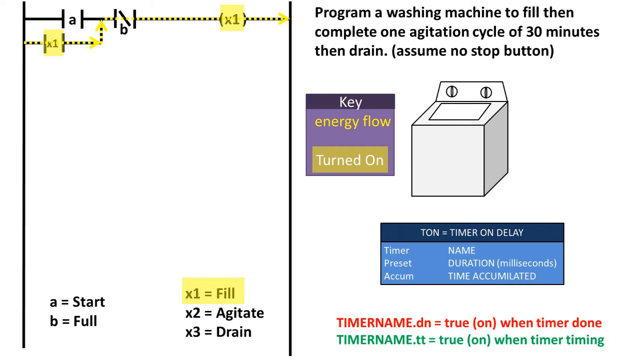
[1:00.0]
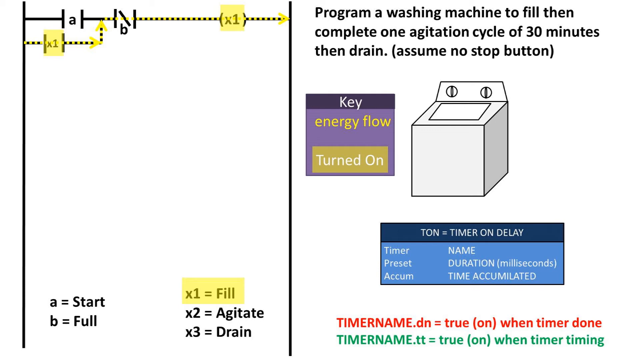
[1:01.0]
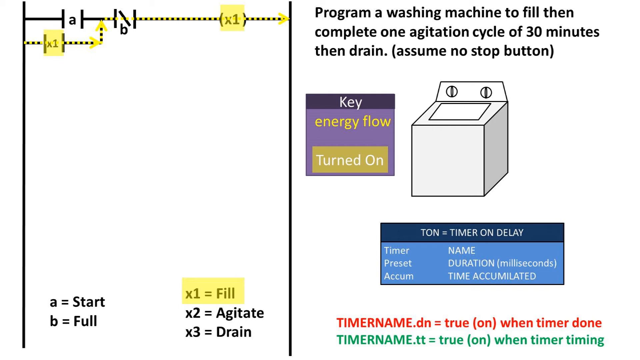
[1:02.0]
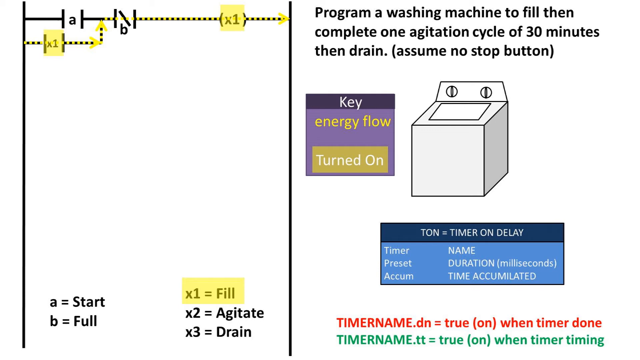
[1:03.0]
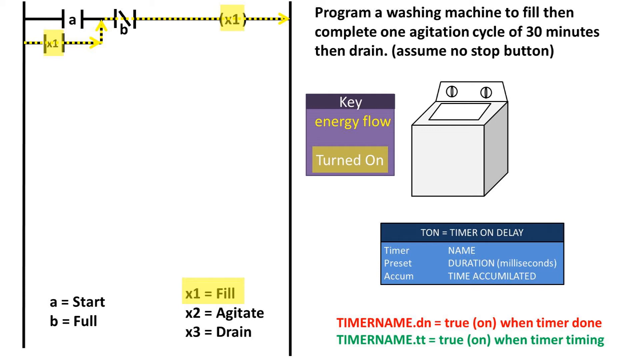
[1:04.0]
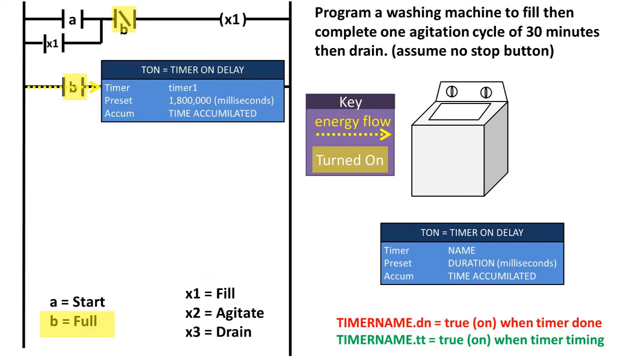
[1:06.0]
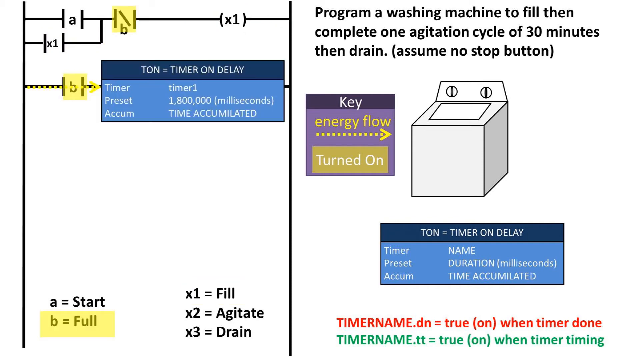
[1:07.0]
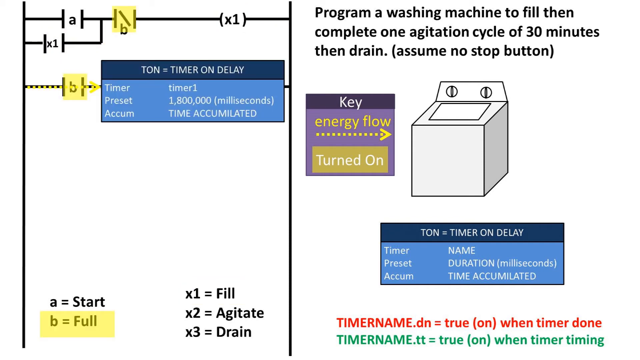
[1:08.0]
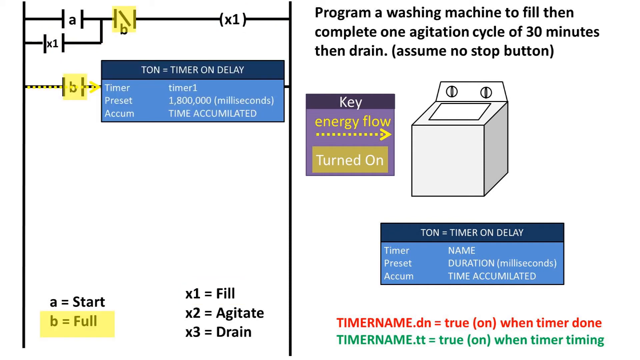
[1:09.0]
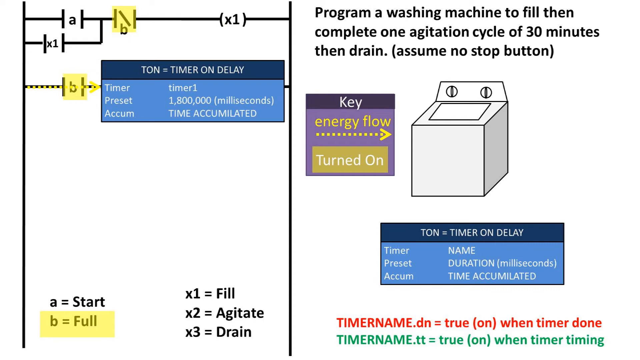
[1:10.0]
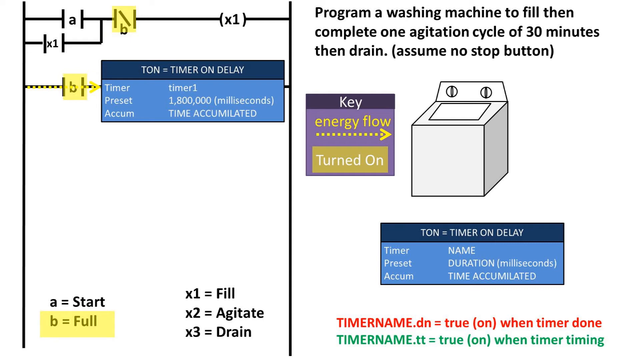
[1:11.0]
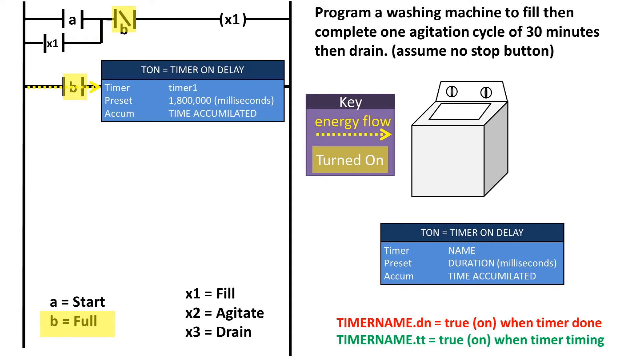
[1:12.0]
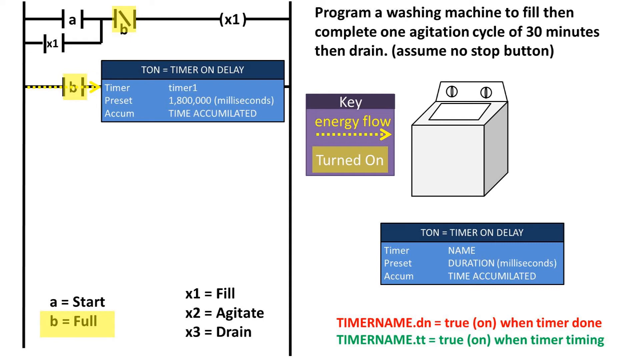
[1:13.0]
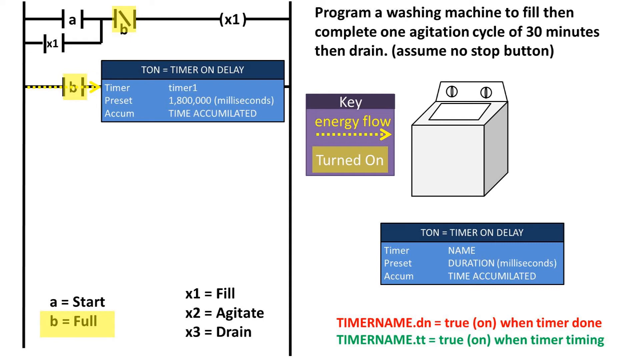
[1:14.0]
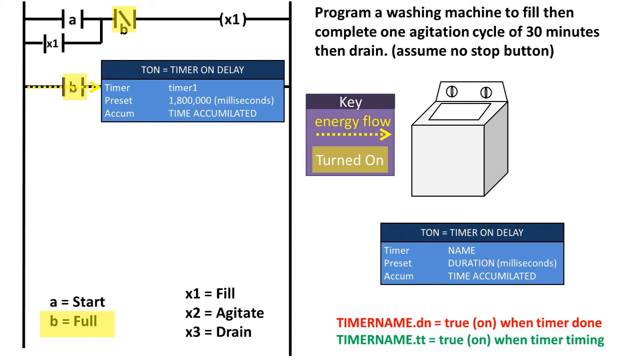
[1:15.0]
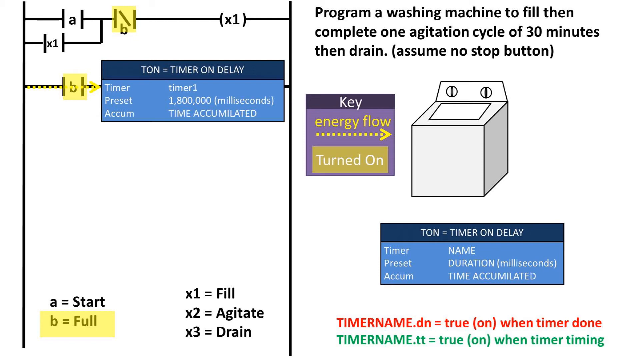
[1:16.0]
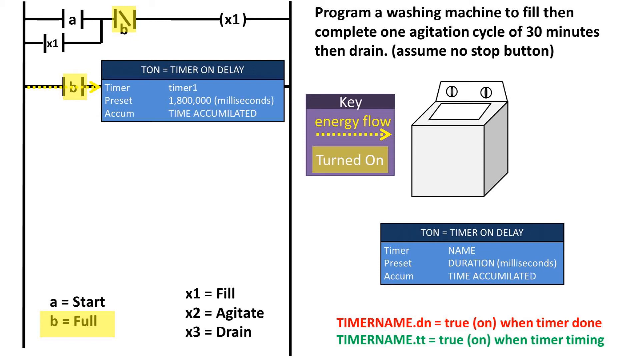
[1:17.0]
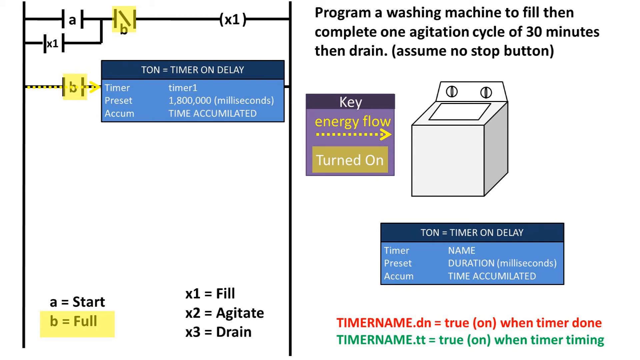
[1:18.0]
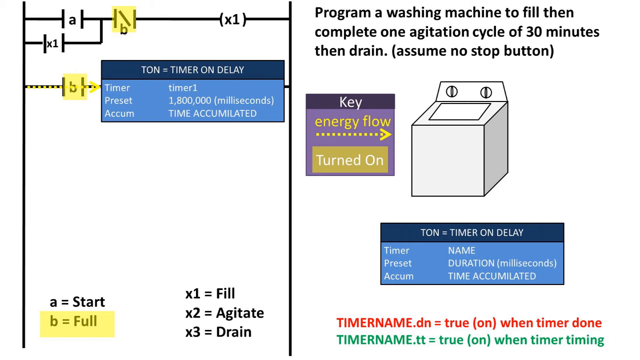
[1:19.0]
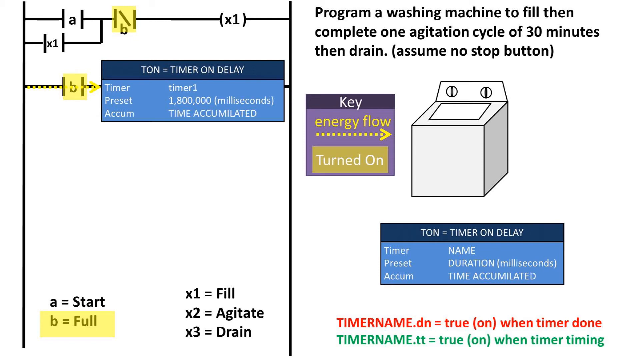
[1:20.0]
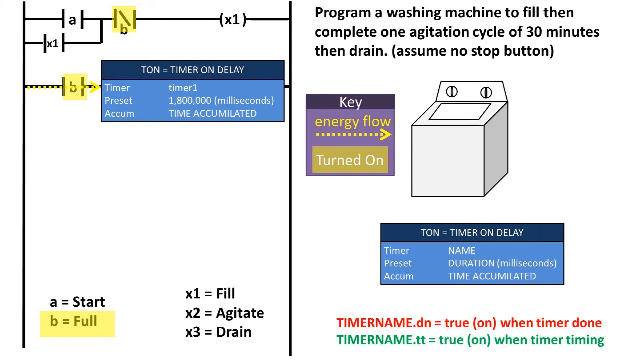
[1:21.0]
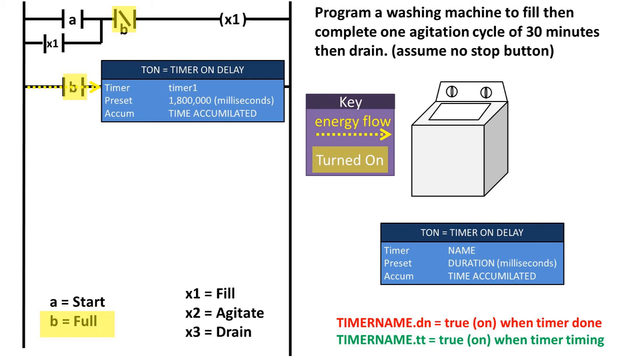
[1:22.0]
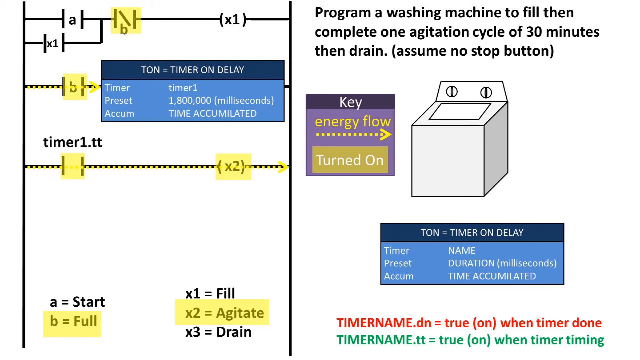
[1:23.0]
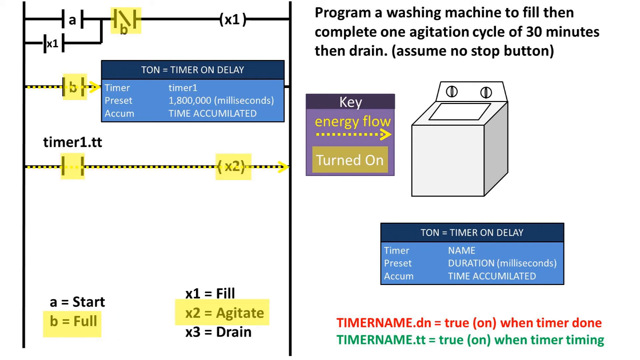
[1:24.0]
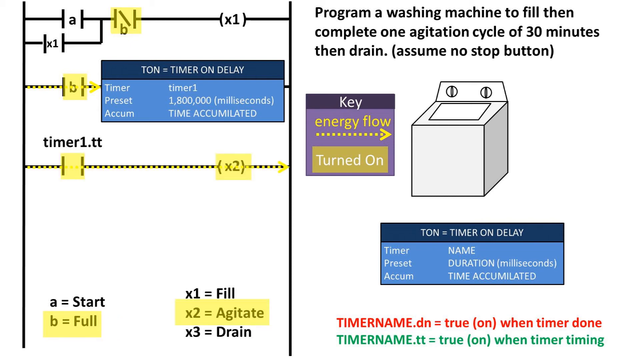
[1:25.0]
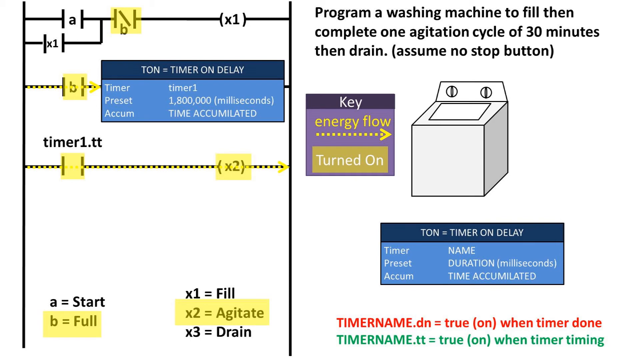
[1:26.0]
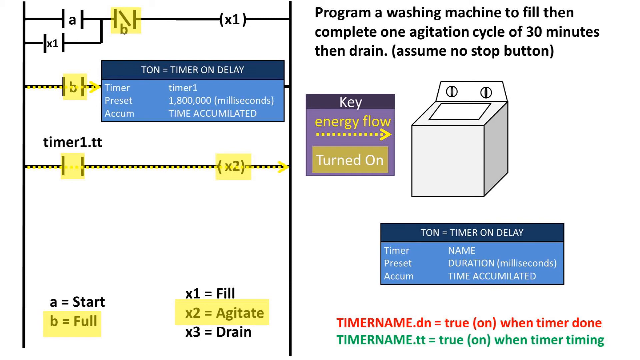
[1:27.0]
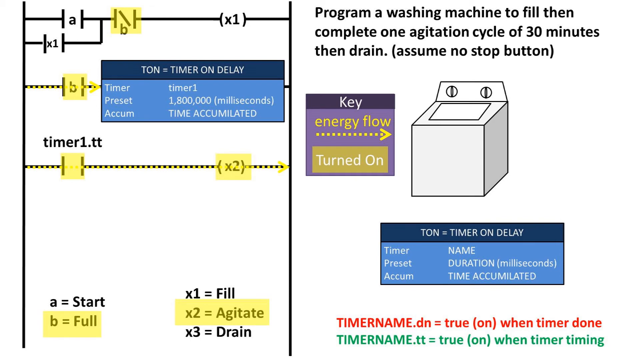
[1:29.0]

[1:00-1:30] The next slide of the presentation shows what seems to be a representation of an electric circuit. The first line has the letter A and the letter B with the NOT symbol, meaning the opposite of B's value. A dotted line connects toward the center of the screen to an X1 in parentheses or brackets, highlighted in yellow. To the right of this is the washing machine shown before. To its left is a small blue and purple rectangle that says "KEY", below it "ENERGY FLOW", and below that a green button with white text that says "TURN ON". Below, where the variables A, B, X1, X2 and X3 are listed, "X1 = FILL" is highlighted in yellow, like some sections of the circuit drawn at the top, possibly indicating that these sections are when the washing machine starts to fill with water.